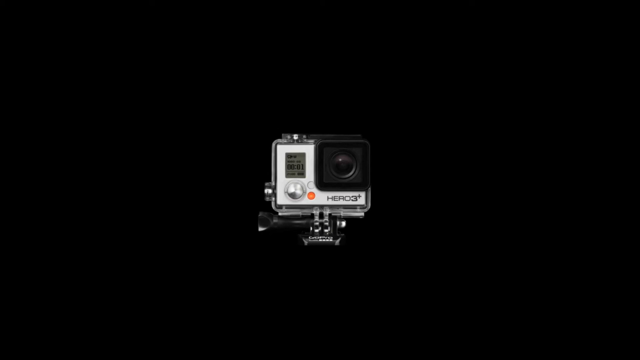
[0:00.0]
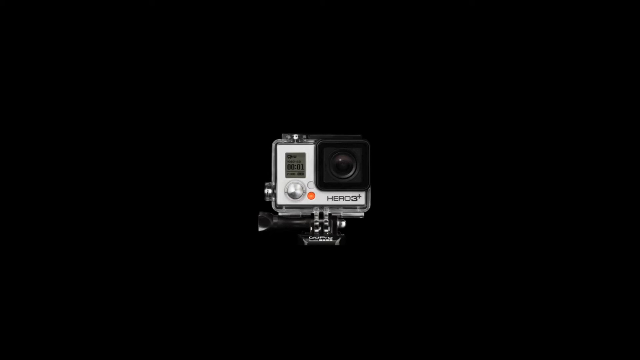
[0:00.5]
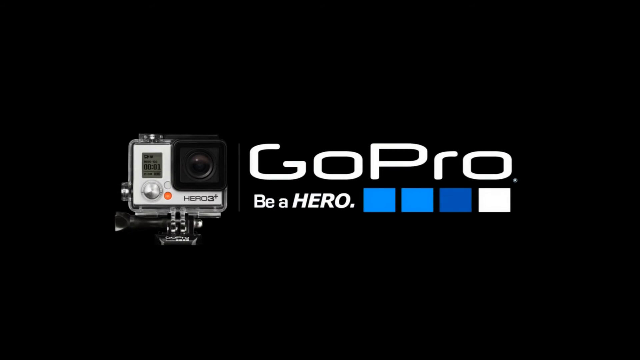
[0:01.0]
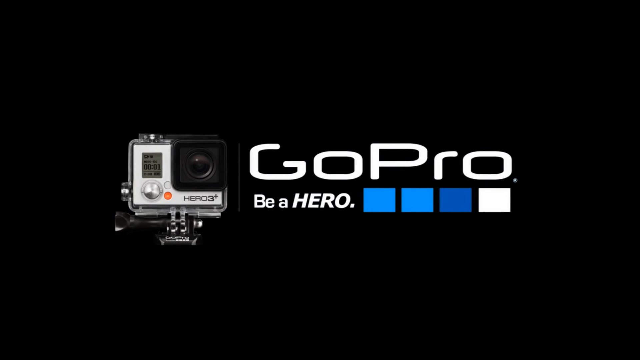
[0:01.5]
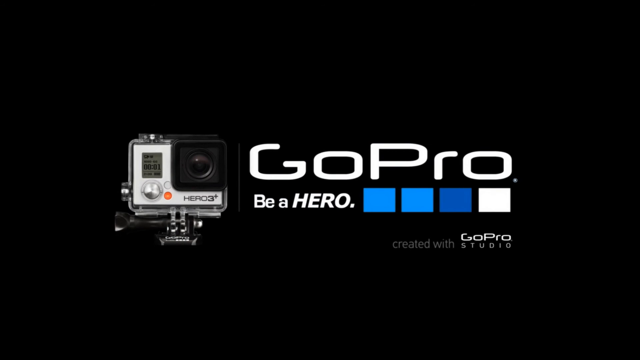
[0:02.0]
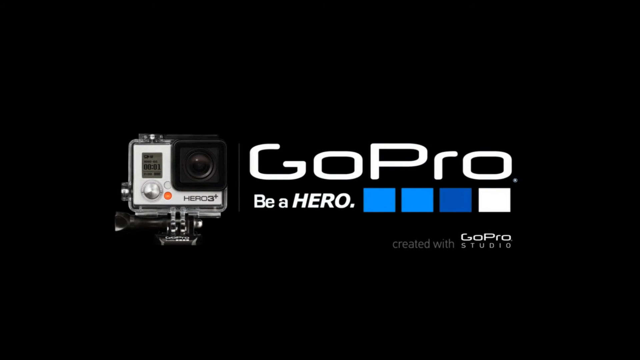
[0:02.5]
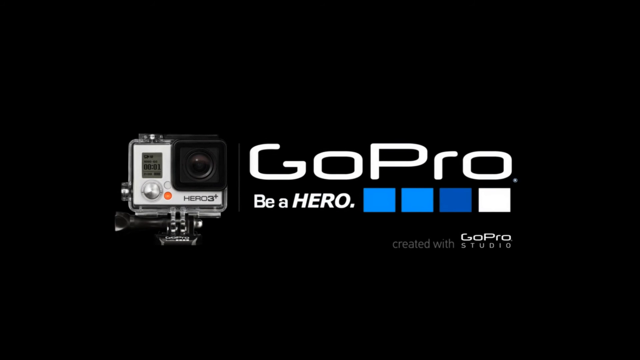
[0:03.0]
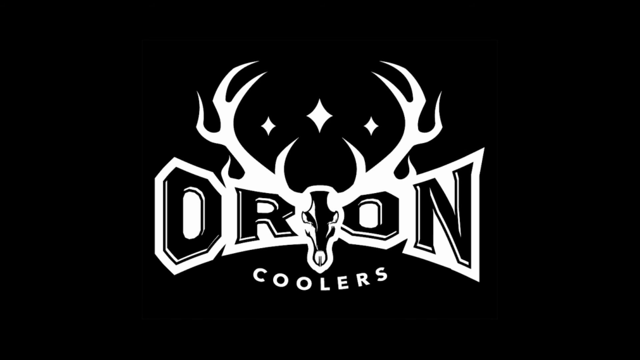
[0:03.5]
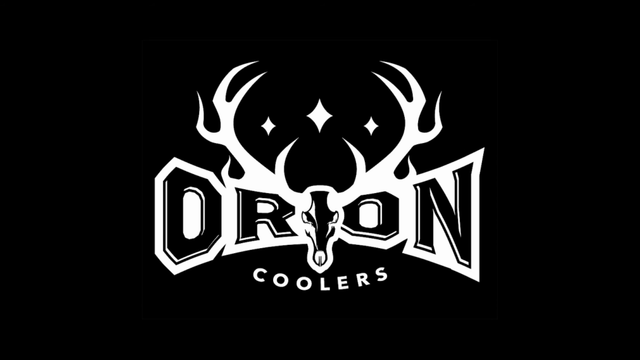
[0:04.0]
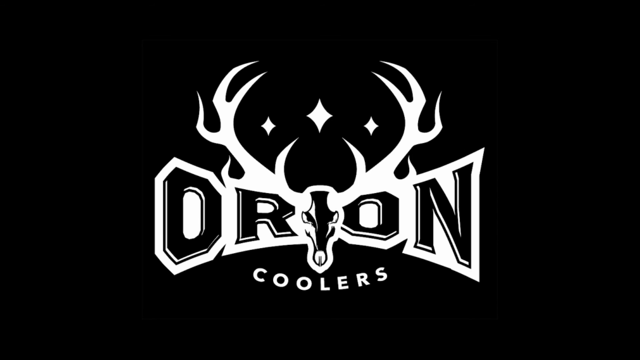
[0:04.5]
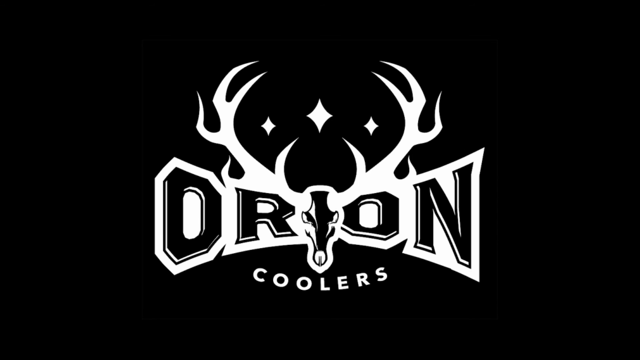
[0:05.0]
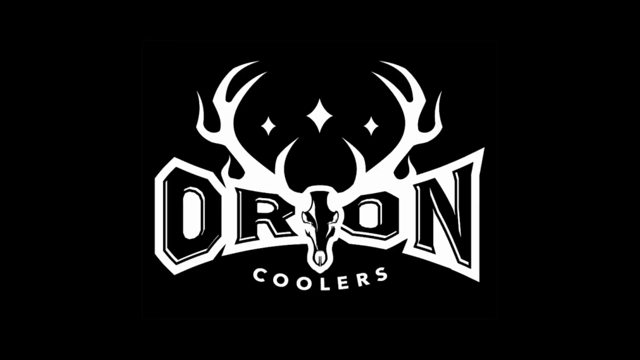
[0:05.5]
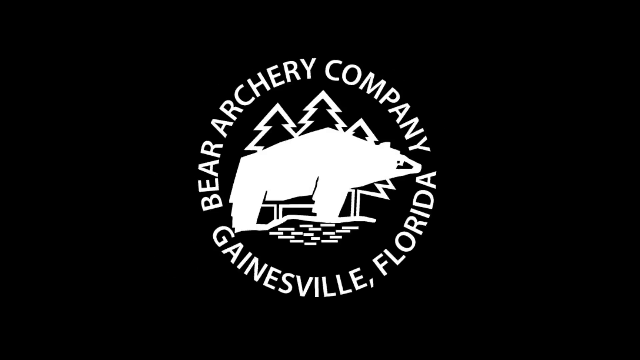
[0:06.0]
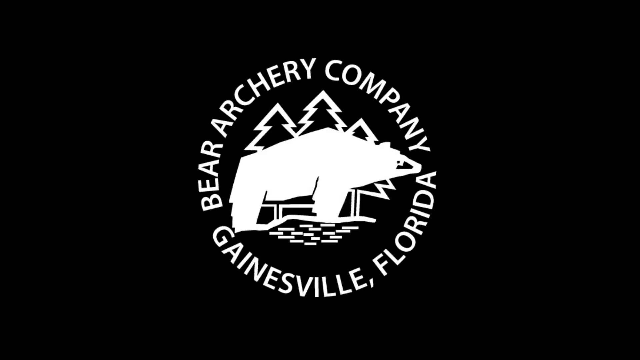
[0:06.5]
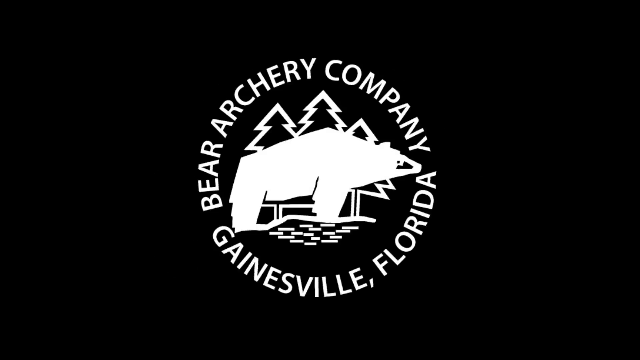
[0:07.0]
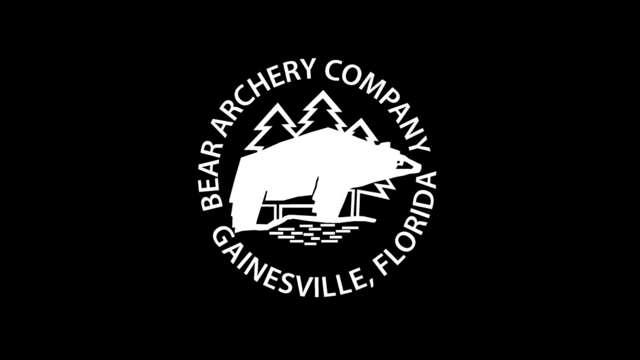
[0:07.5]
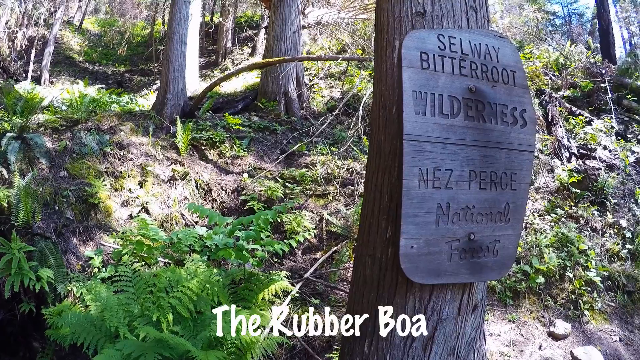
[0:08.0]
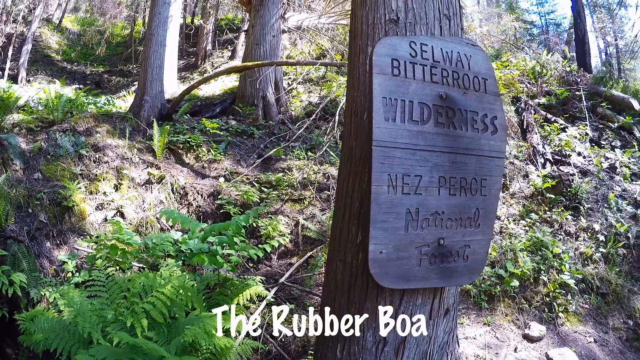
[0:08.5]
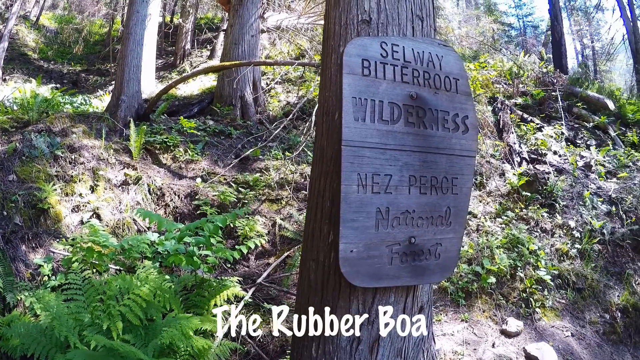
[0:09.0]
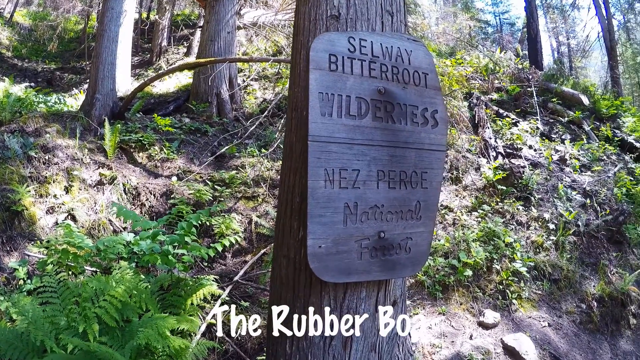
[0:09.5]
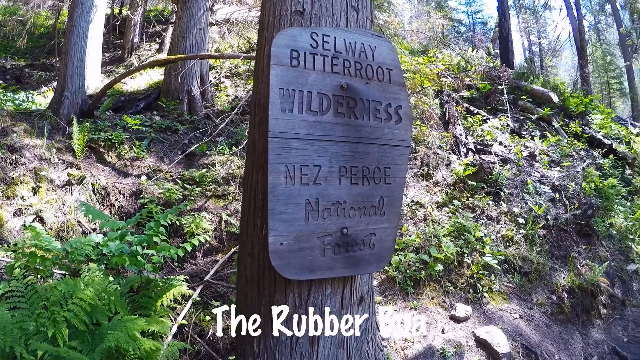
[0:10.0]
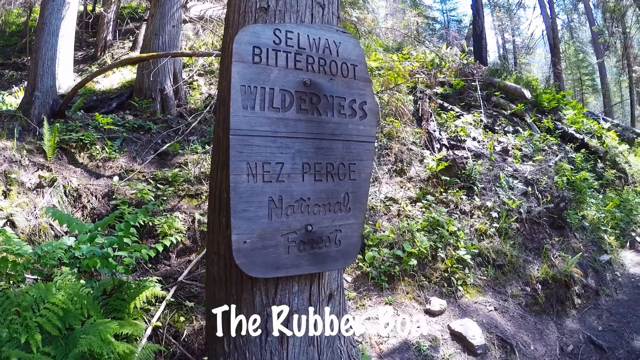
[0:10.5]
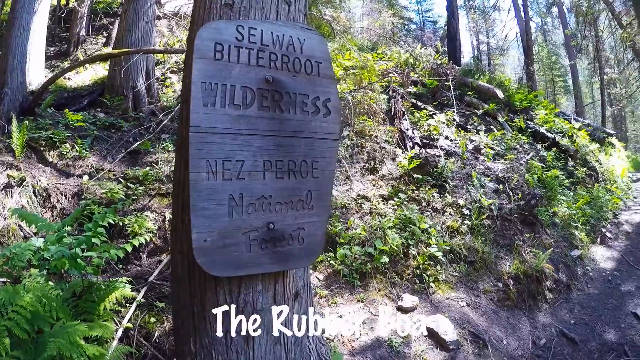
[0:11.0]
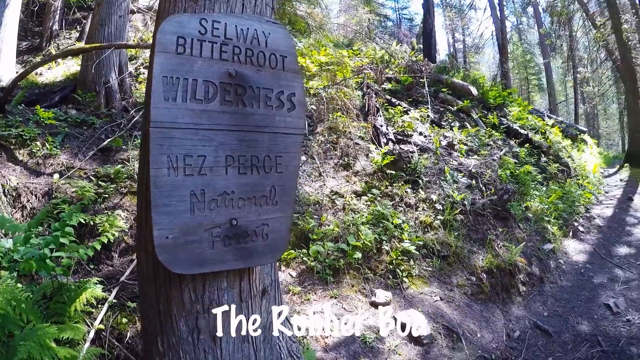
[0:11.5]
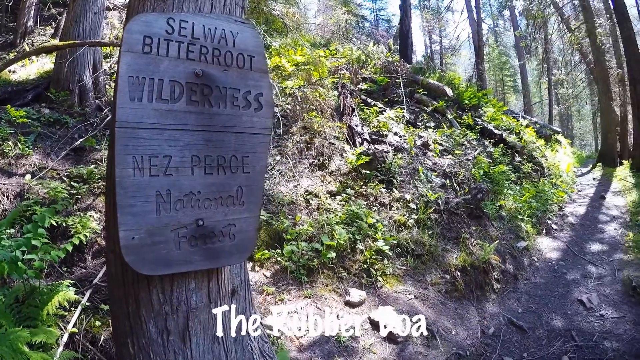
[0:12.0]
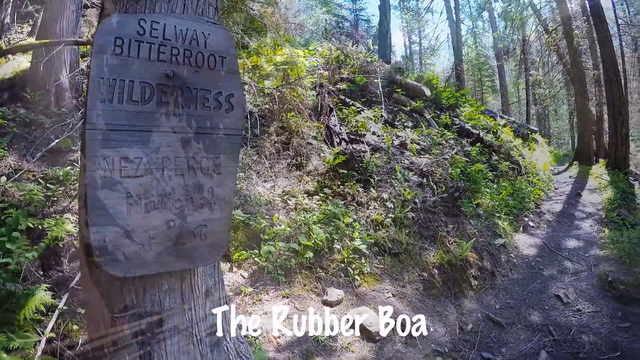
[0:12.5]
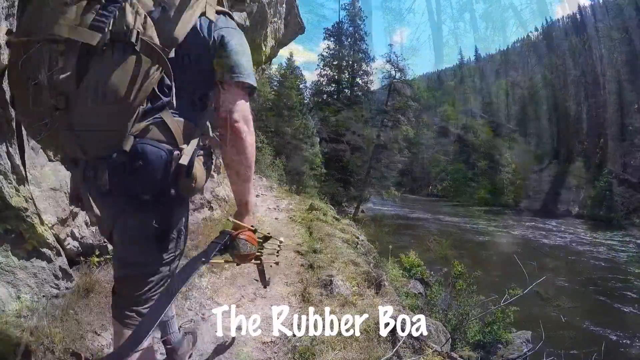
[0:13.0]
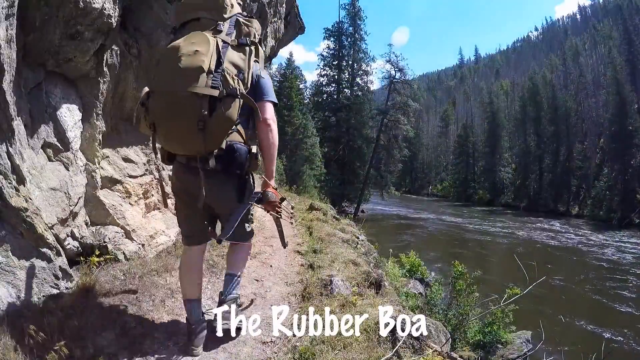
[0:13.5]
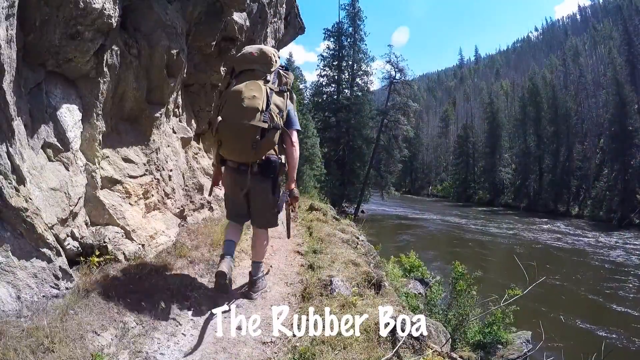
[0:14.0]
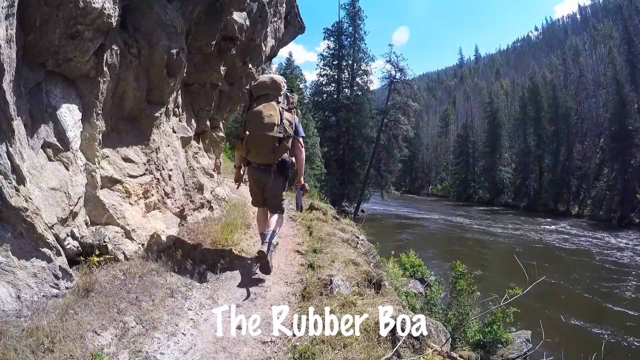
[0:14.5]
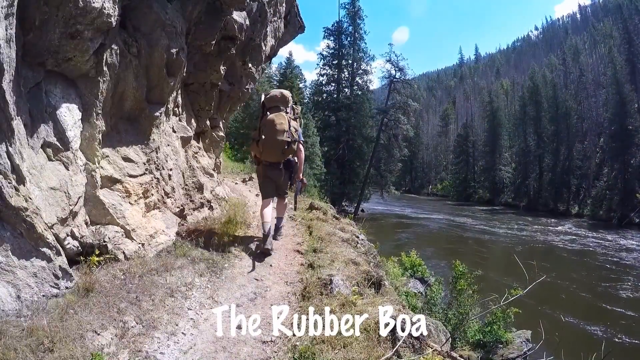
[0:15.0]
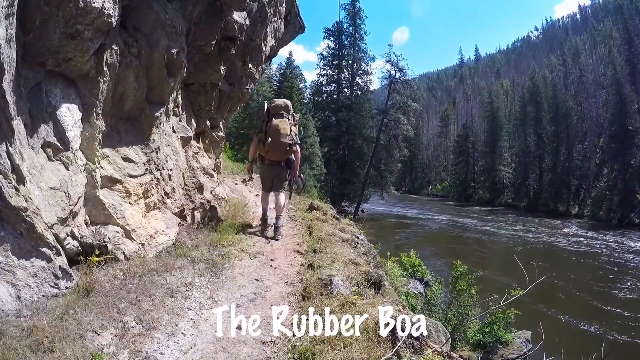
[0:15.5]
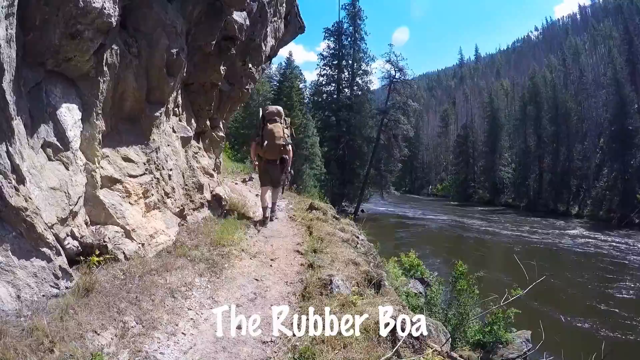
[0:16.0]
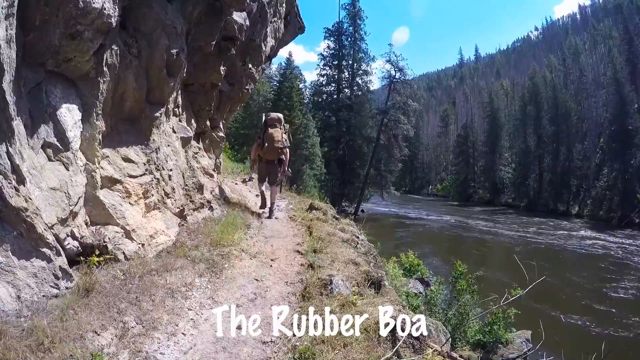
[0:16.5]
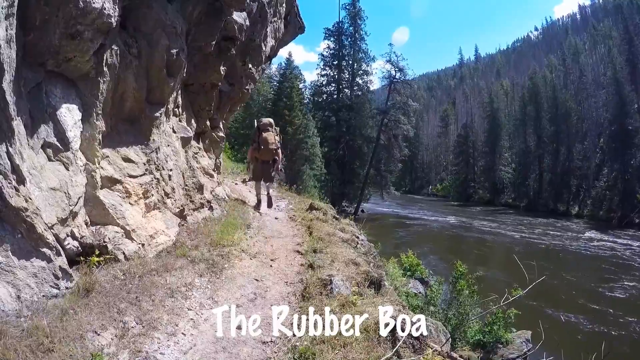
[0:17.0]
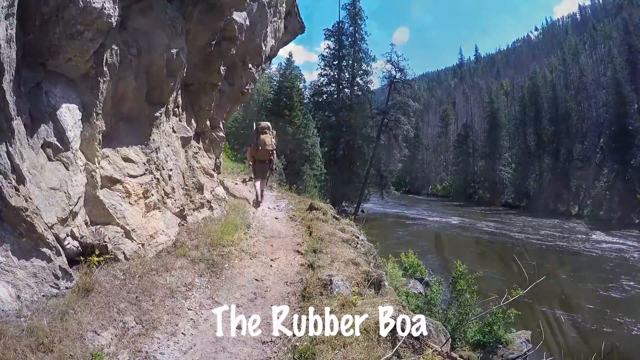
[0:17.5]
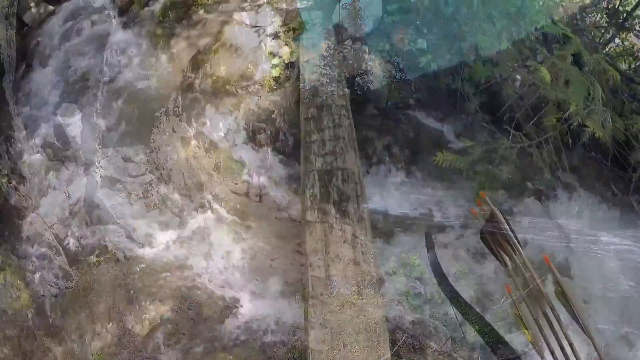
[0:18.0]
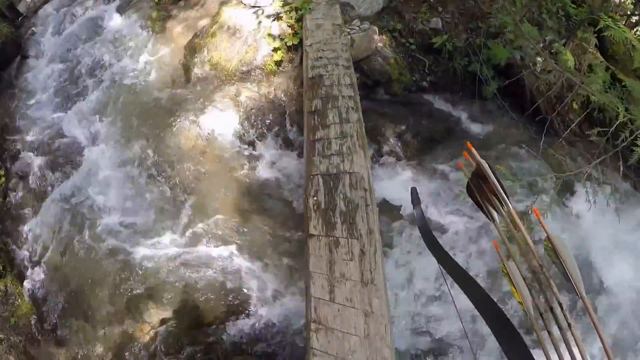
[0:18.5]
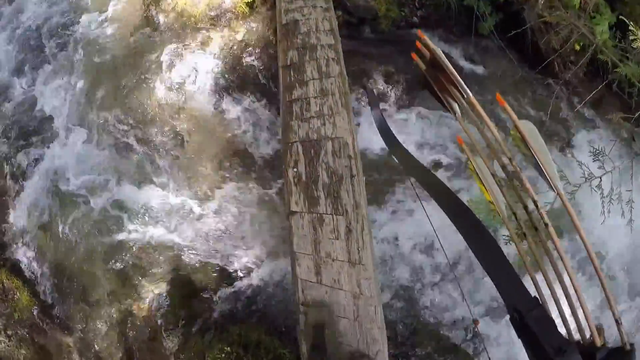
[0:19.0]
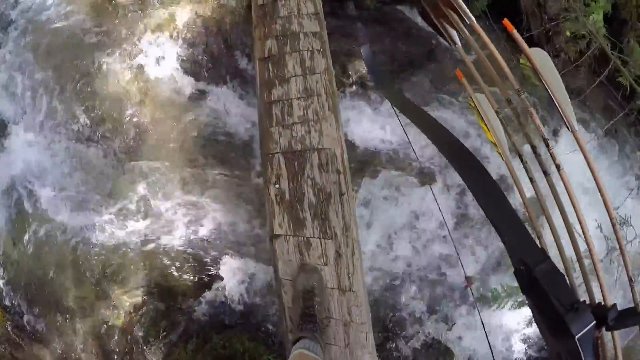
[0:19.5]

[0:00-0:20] The video opens on a solid black background with the text "Hero 3 plus" and a view of the front side of a camera. A message pops out the side reading "GoPro be a hero," with two light blue dots, a dark blue dot and a white dot; underneath it reads "created with GoPro Studio." Another message appears with a deer head, reading "Orland and Bear Archery Company, Gainesville, Florida," alongside an image of a bear standing in front of some trees. Next comes a live image of the Selway Bitterroot Wilderness in Nez Perce National Forest, with "The Rubber Boa" written underneath. A man walks down a trail wearing a backpack and carrying a long bow in his right hand. He walks across an old log over a river without hesitating.